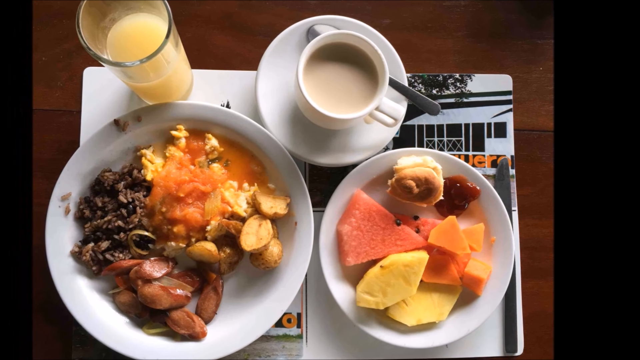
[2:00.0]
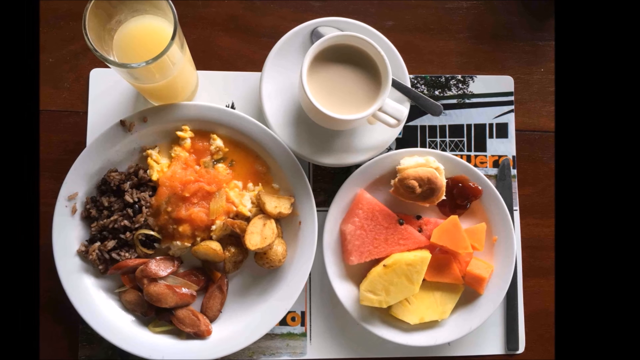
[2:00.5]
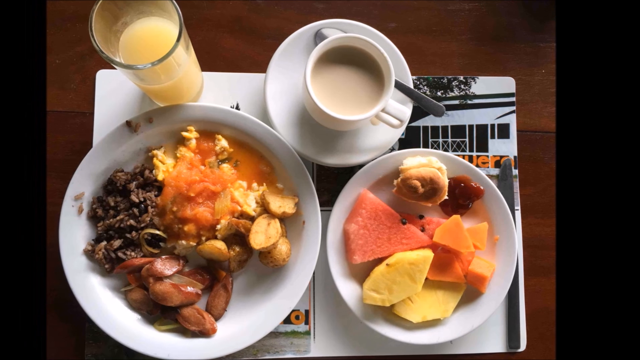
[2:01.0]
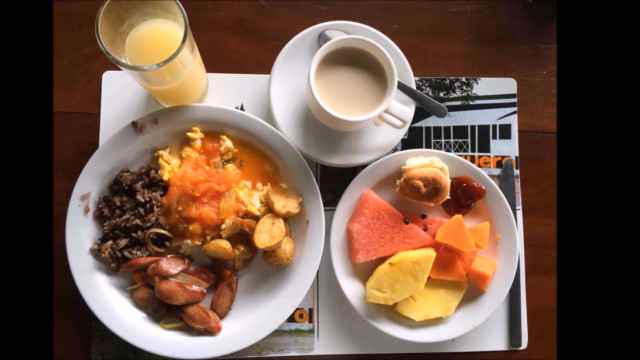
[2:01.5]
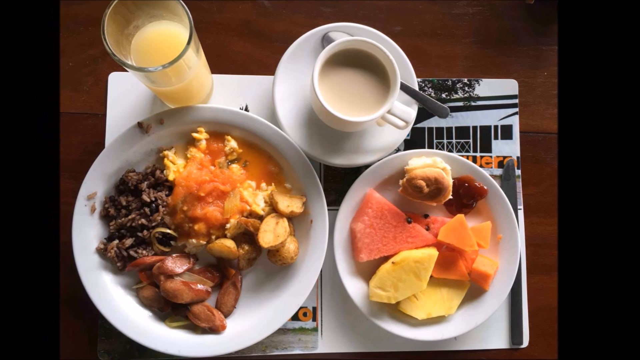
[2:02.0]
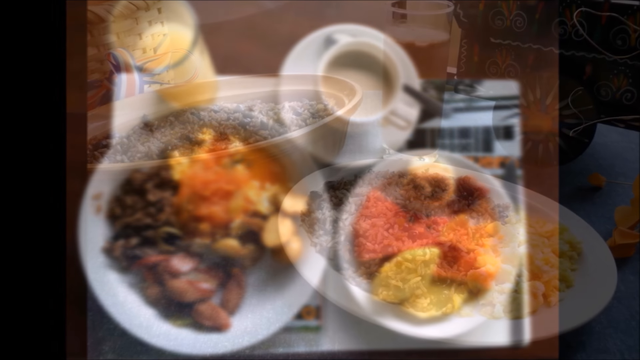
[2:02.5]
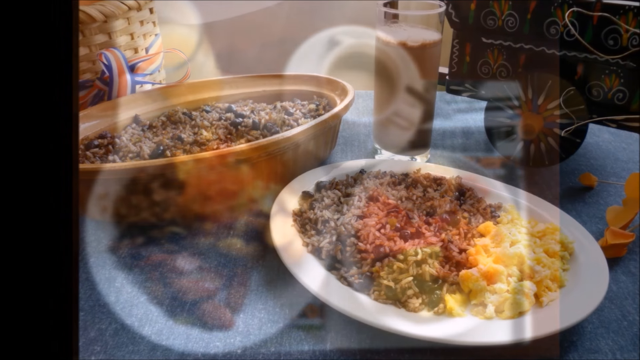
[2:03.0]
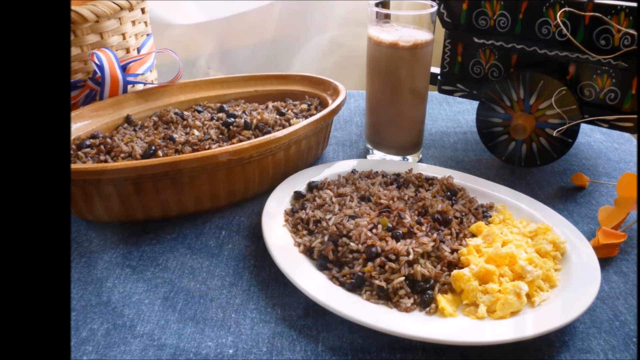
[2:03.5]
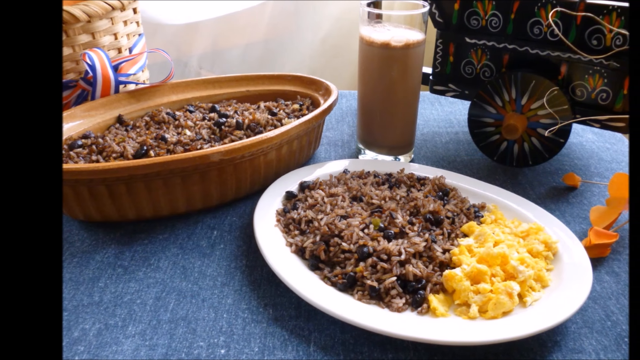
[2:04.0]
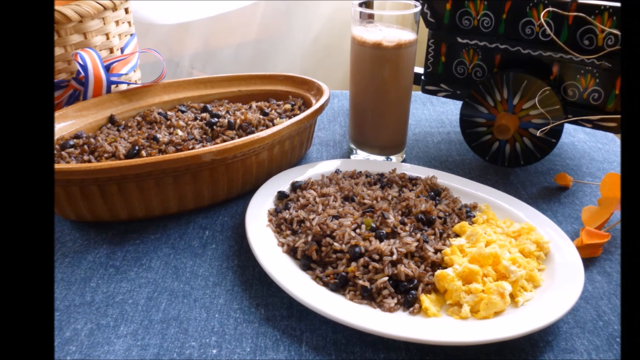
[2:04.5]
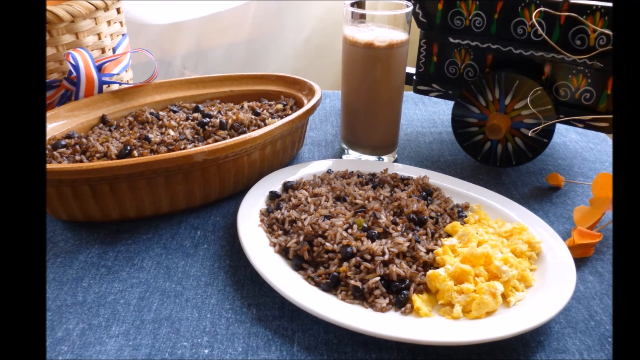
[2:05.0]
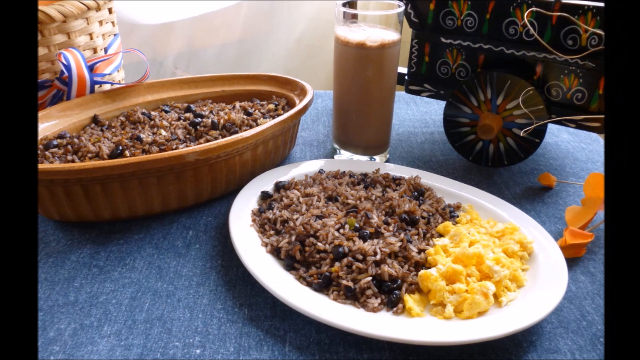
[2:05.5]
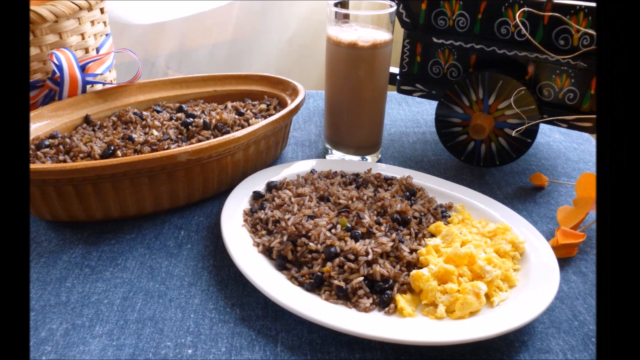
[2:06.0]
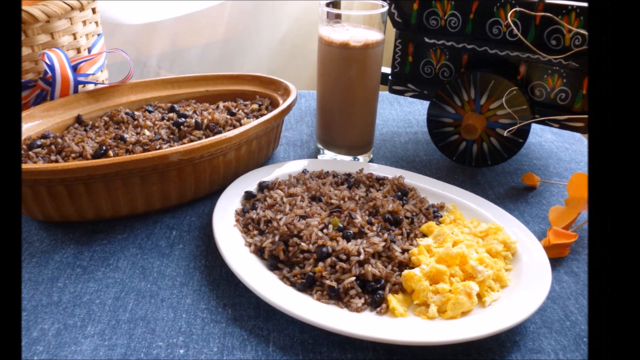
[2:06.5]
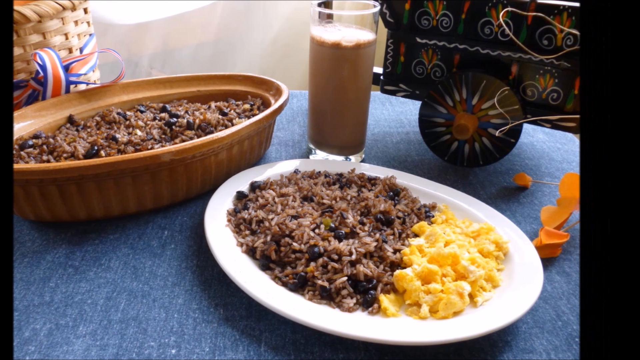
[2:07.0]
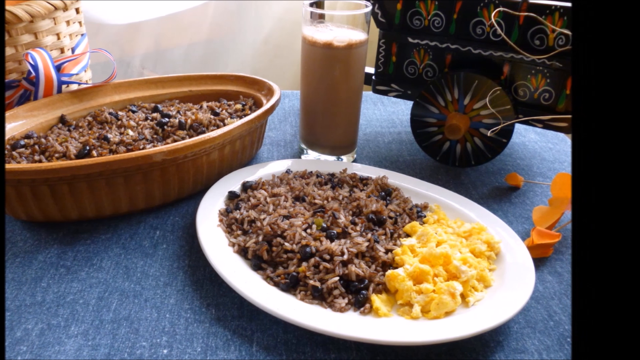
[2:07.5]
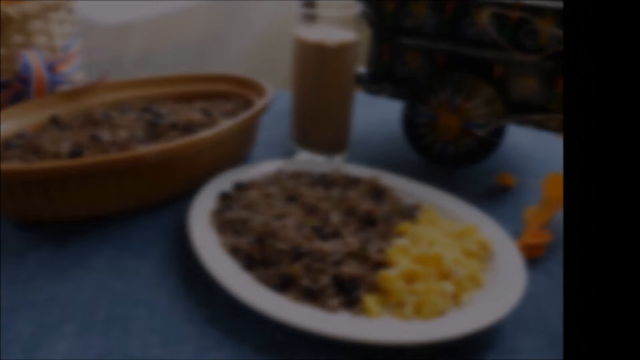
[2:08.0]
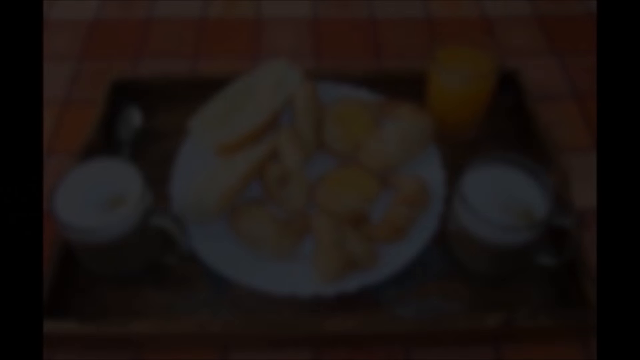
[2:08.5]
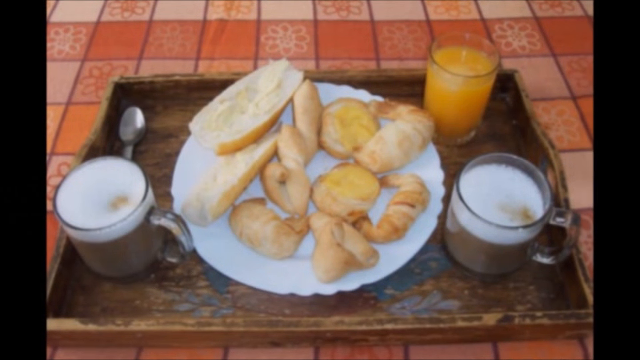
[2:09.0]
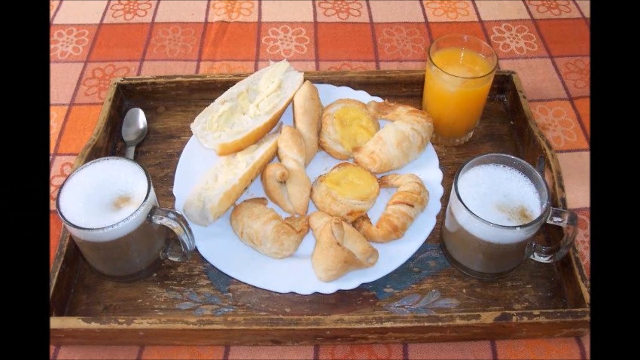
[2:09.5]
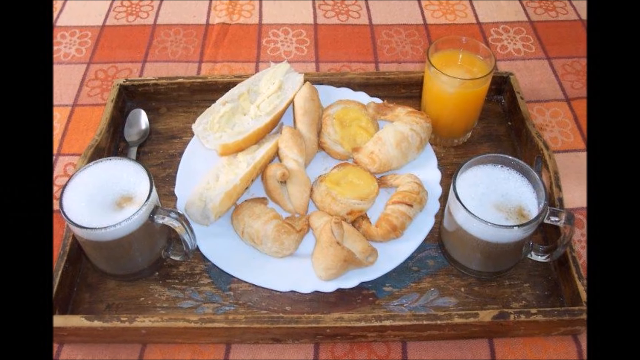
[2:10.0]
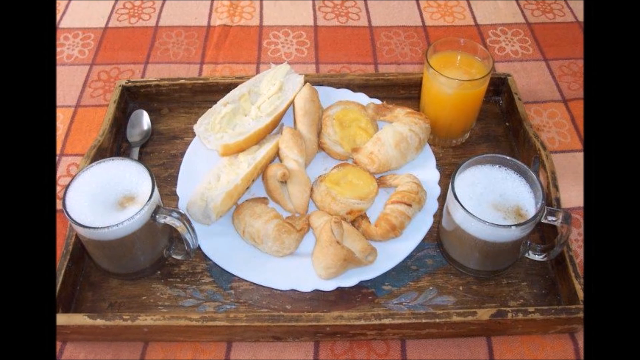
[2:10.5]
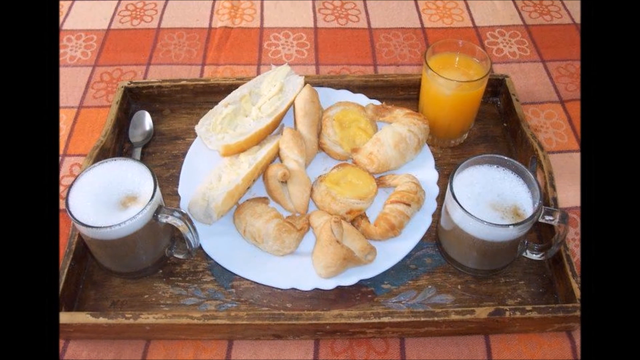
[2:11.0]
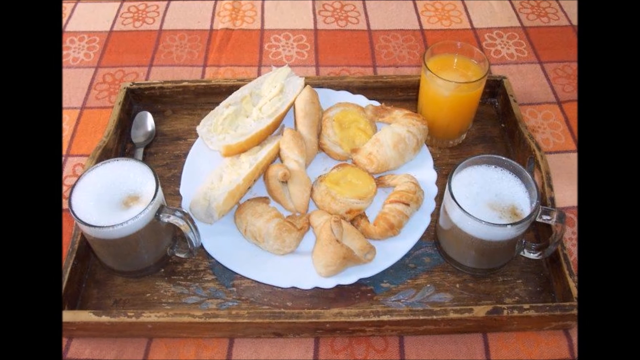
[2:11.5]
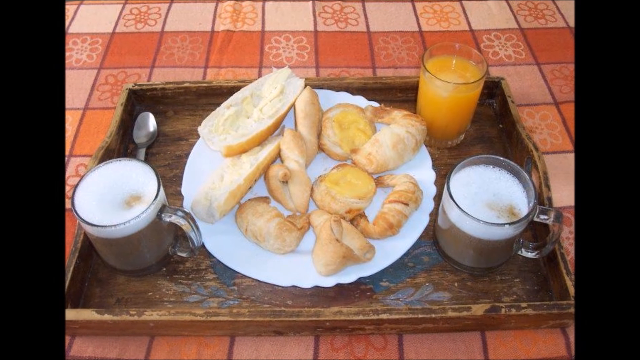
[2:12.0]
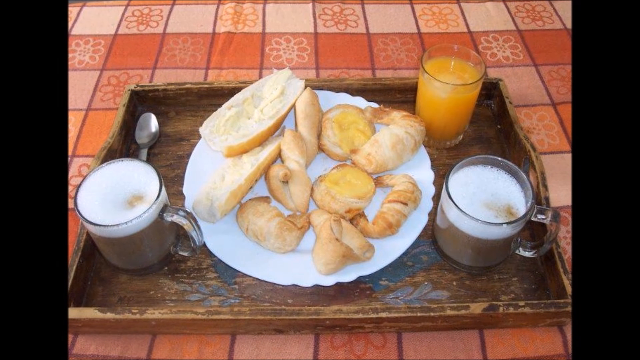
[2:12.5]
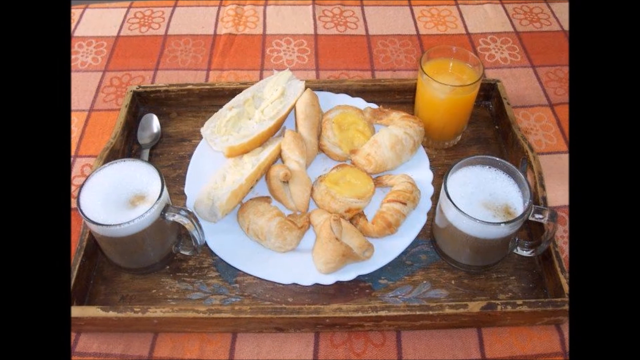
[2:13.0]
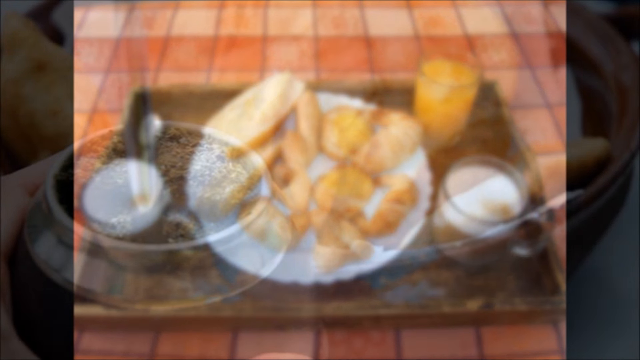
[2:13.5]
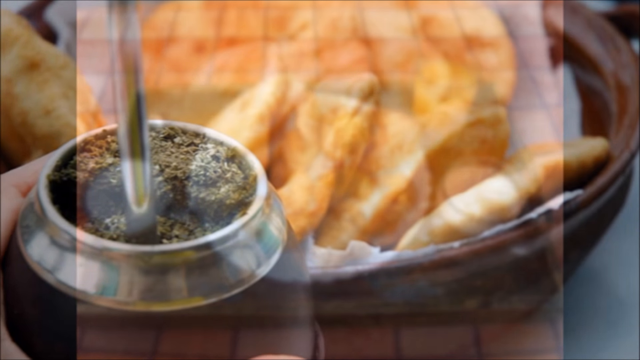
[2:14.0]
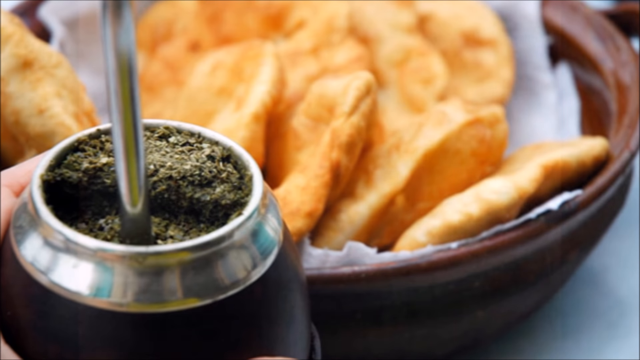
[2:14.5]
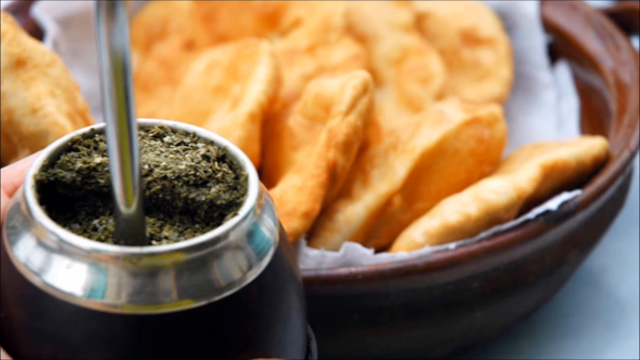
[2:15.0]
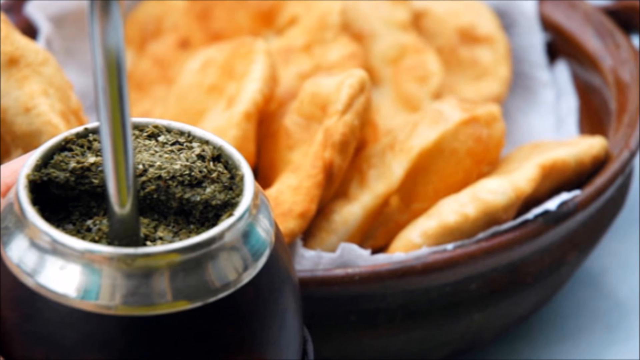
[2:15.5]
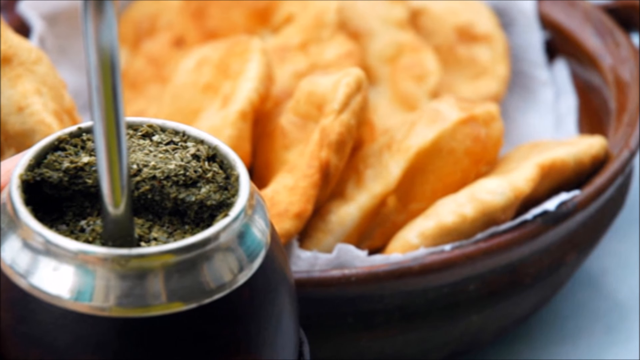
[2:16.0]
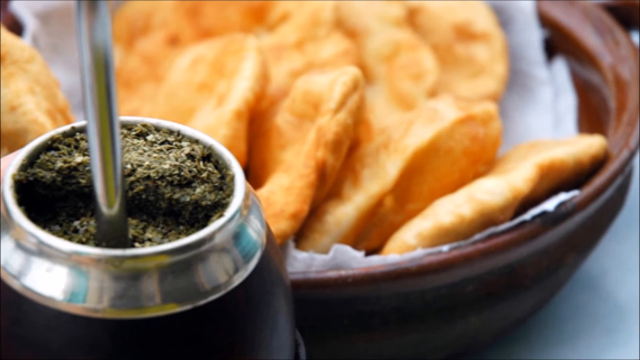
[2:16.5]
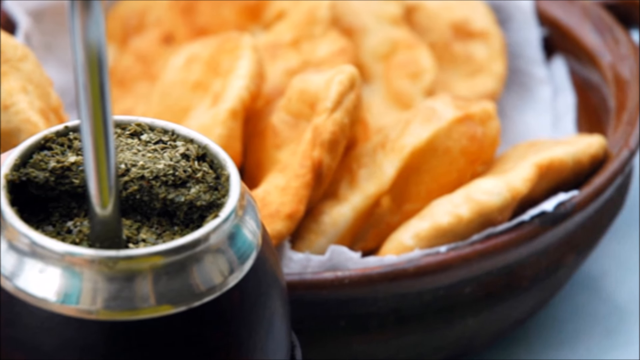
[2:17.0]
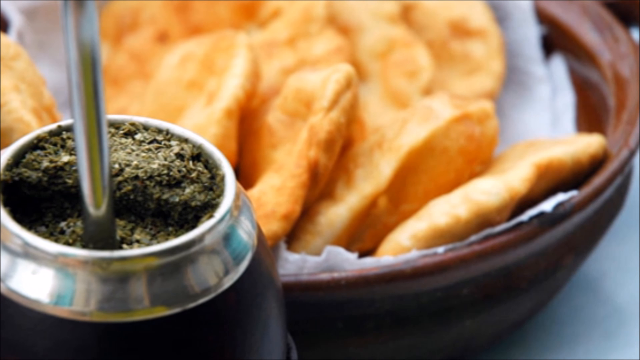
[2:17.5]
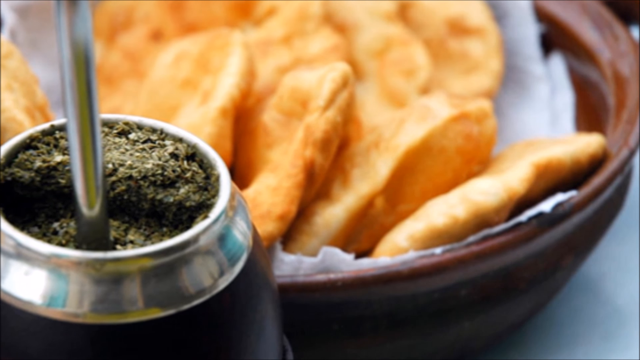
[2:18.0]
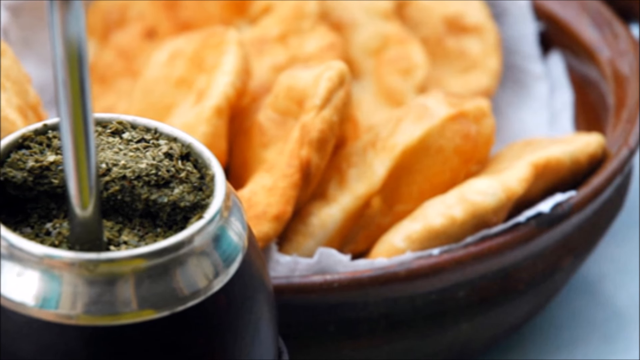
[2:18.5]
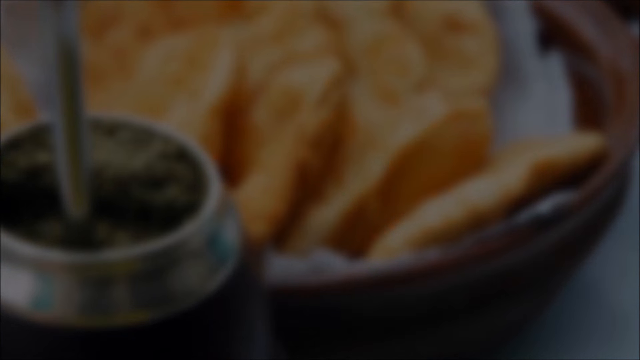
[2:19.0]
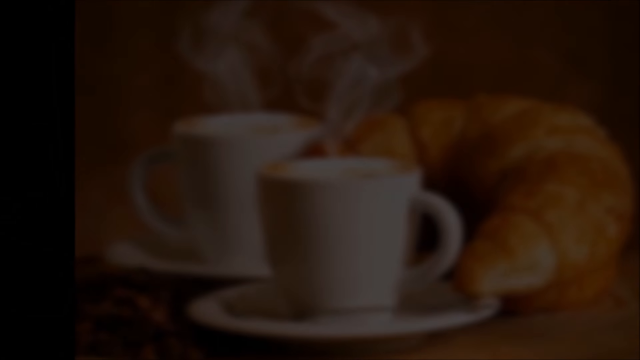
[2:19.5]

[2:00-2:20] This breakfast is on a dark wooden table with a placemat bearing an image of a boat or house, obscured by three dishes. The left dish has some kind of brown meat, some sliced sausages at the bottom, some potatoes on the right side and some orange soupy substance on top. Above it is a glass of orange juice, and to the upper right of that is a cup of coffee with heavy cream and a spoon, on a white saucer. At the bottom right is a plate with slices of watermelon without the rind, slices of pineapple and chunks of cantaloupe, with a small pastry with jam above the melon pieces. It fades to an image of a round brown casserole dish filled with brown rice on a denim tablecloth. Next to it is a tall glass of chocolate milk or coffee. Below that is a white plate filled halfway with rice, with scrambled eggs on the right half. An ornamental antique wooden wagon is at the upper right. It fades to an orange-tiled floral pattern tablecloth with a wooden tray on it. On the tray are a cup of coffee on each side with cream at the top and a scalloped white plate filled with pastries such as halved baguettes with butter, croissants and danishes, plus a glass of orange juice at the upper right of the tray. The view zooms out, showing a metallic cylindrical can of some substance, seemingly herbs, at the upper left, and, blurred in the back, a brown bowl full of flatbread.